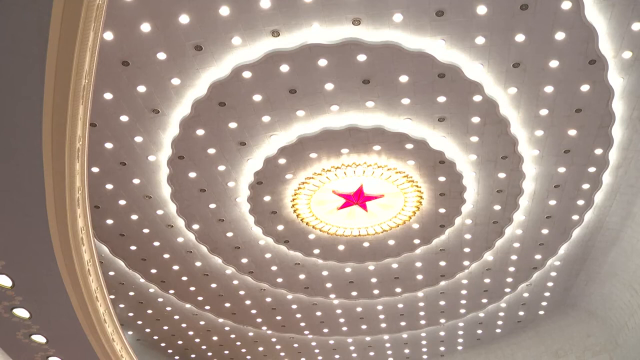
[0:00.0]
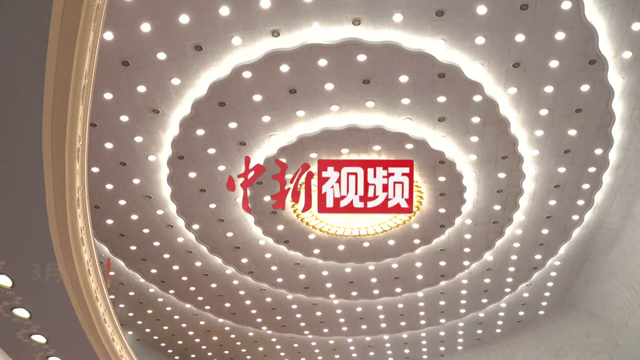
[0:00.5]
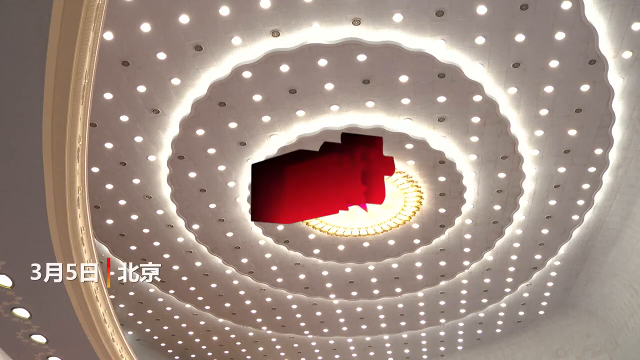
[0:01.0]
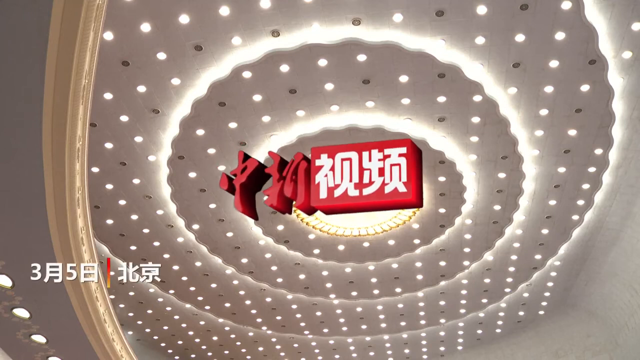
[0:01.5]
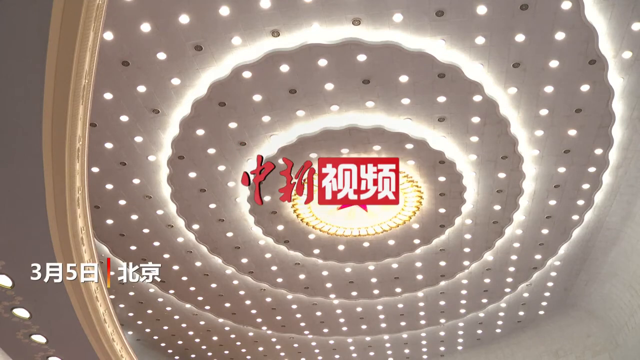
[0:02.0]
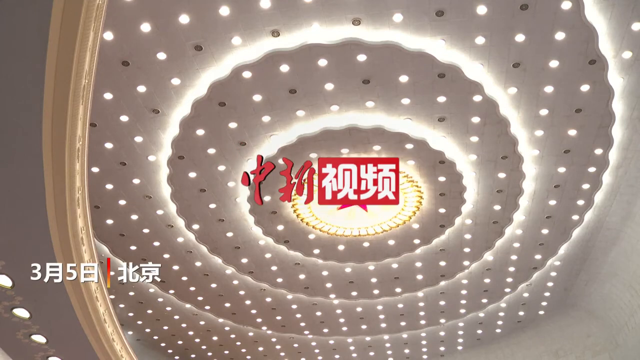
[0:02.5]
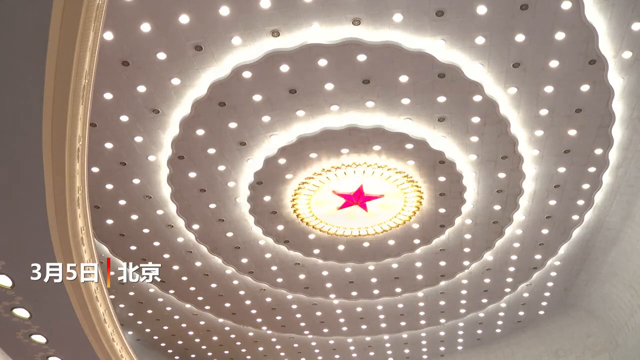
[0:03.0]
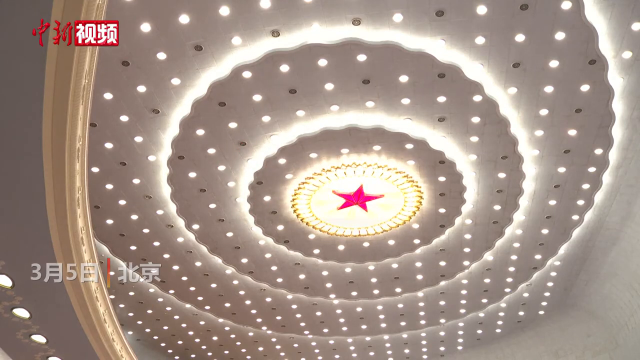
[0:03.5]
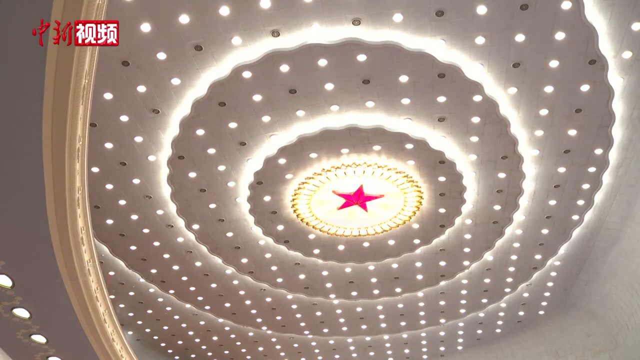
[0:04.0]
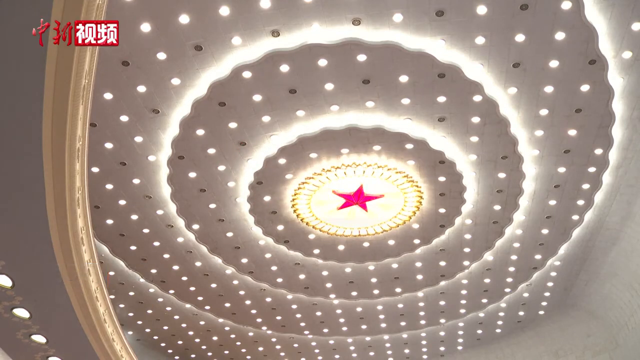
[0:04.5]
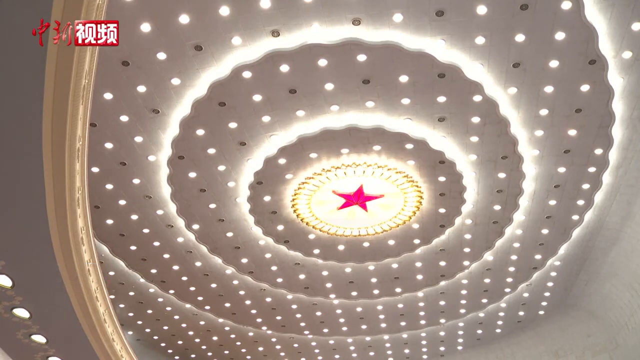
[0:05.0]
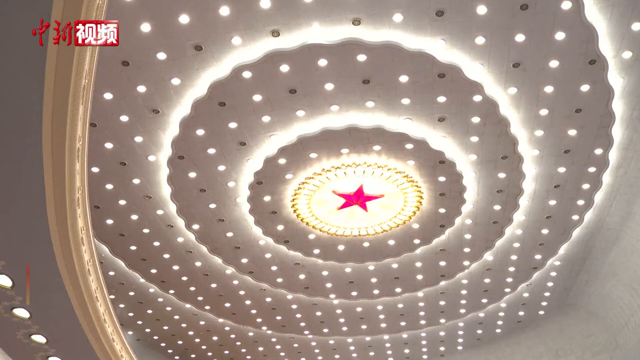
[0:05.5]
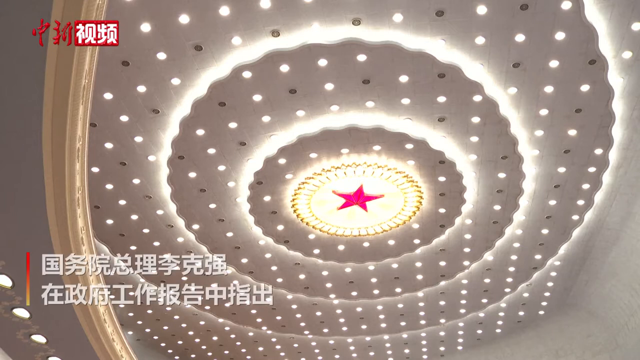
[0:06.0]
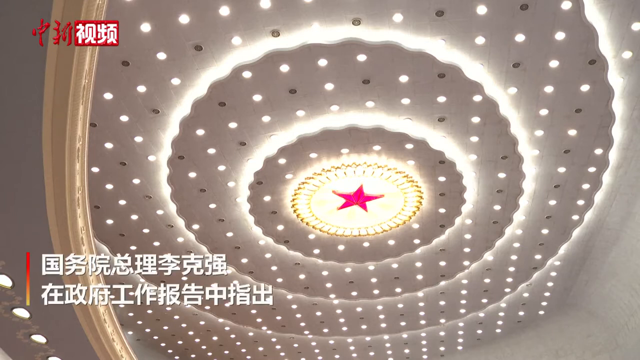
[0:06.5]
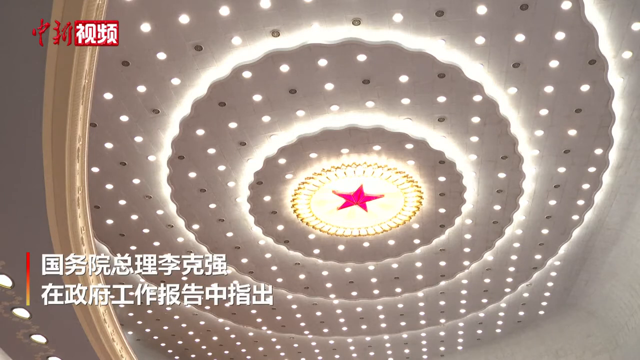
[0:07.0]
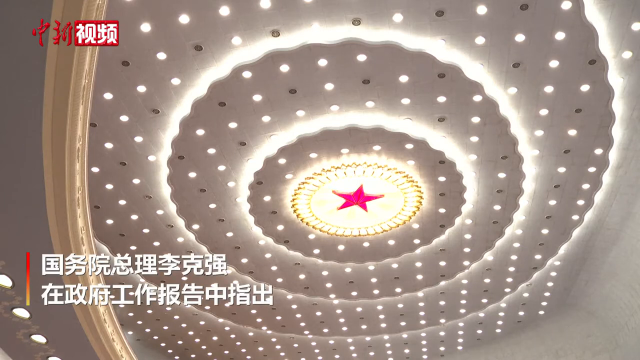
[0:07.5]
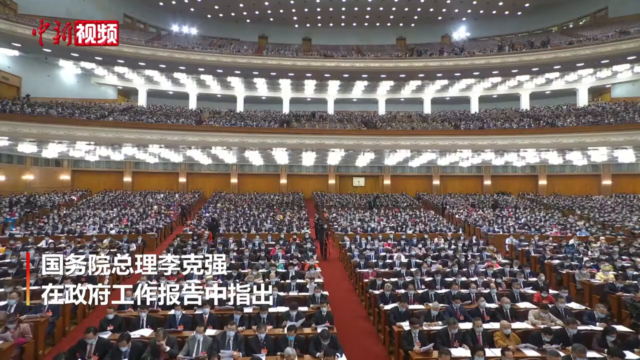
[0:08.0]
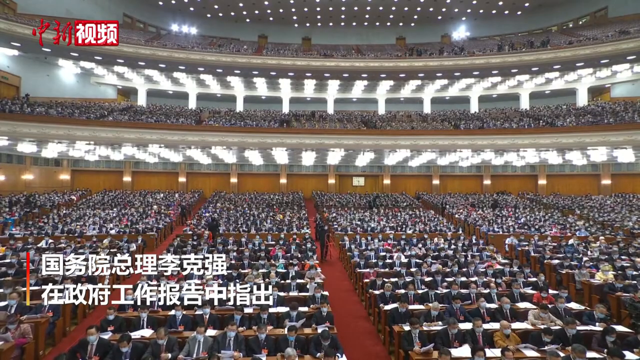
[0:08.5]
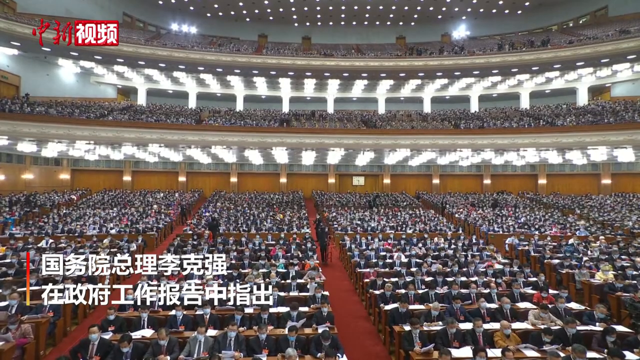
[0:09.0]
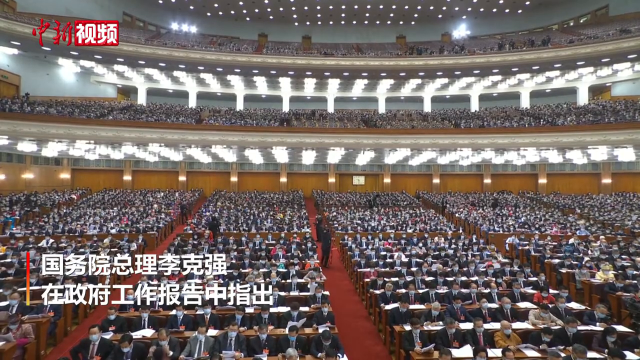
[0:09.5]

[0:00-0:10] The video opens on the ceiling inside what looks like a very large building. The ceiling appears white and gray, and lights seem to be shining on it so that it looks covered in white and gray polka dots. White swirls on the ceiling form a circular formation. In the middle of the ceiling there appears to be a round white circle with gold detailing, and in the very middle of this circle is a red star. Words in a global language then appear, and people are seen sitting inside the very large room.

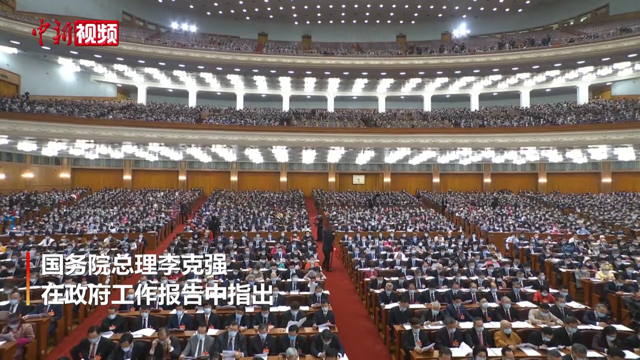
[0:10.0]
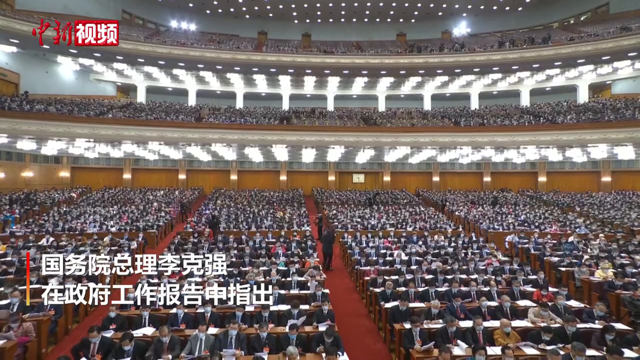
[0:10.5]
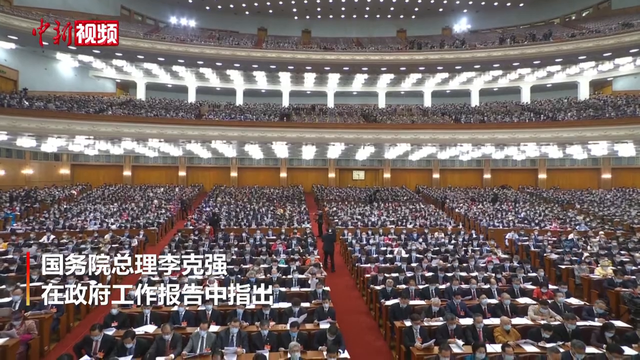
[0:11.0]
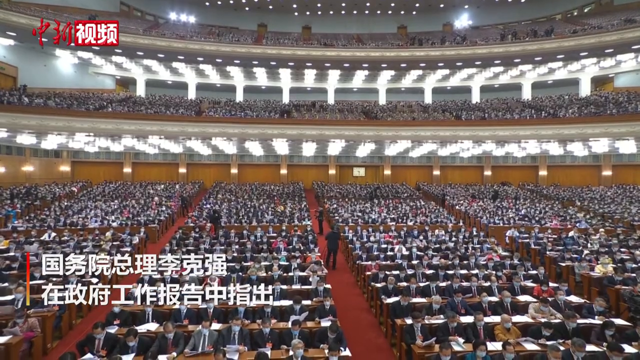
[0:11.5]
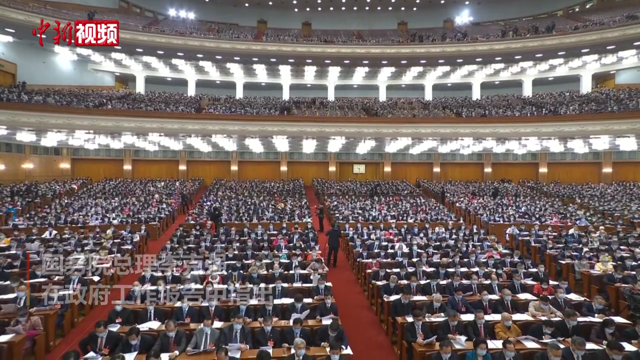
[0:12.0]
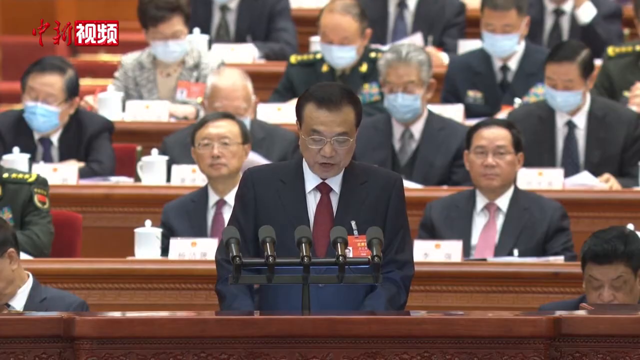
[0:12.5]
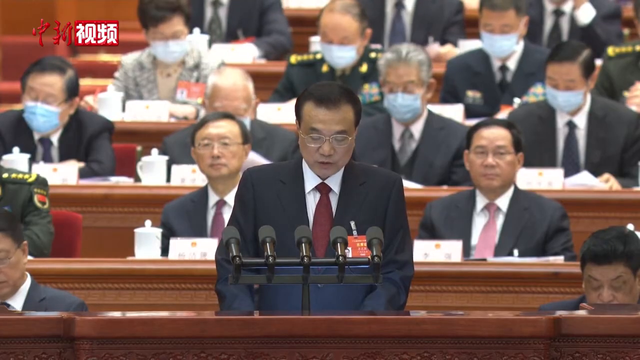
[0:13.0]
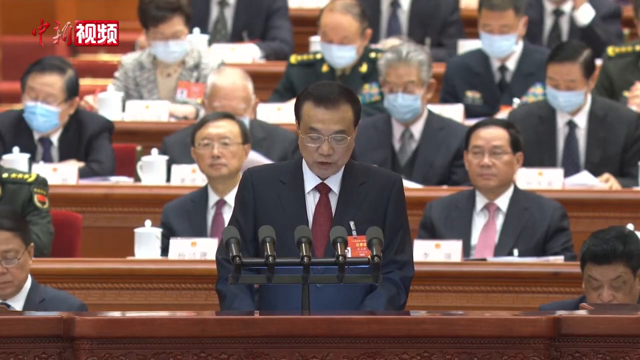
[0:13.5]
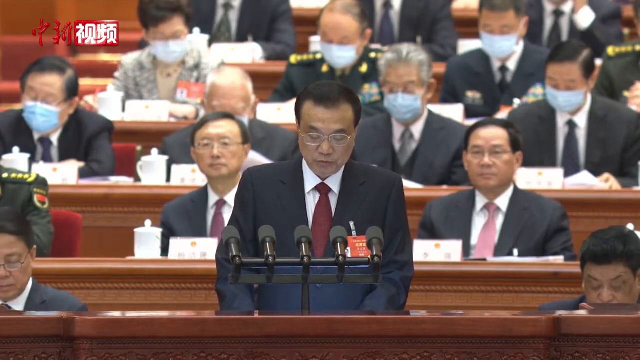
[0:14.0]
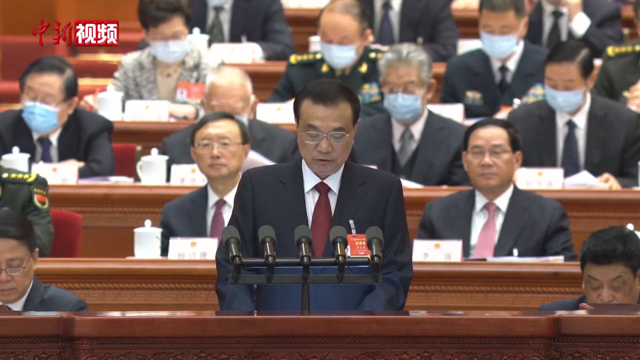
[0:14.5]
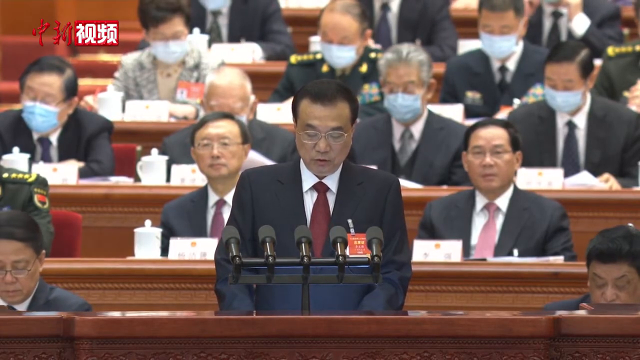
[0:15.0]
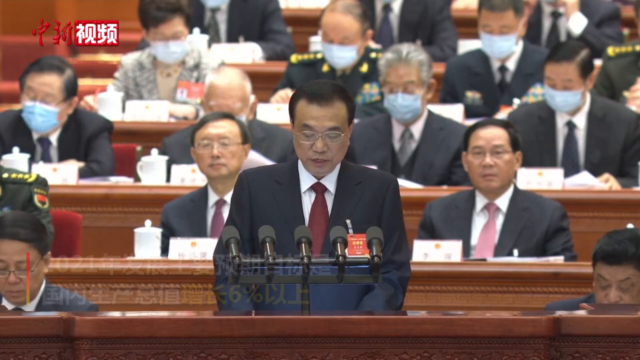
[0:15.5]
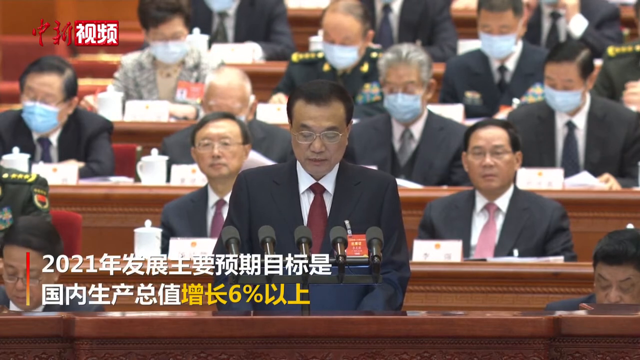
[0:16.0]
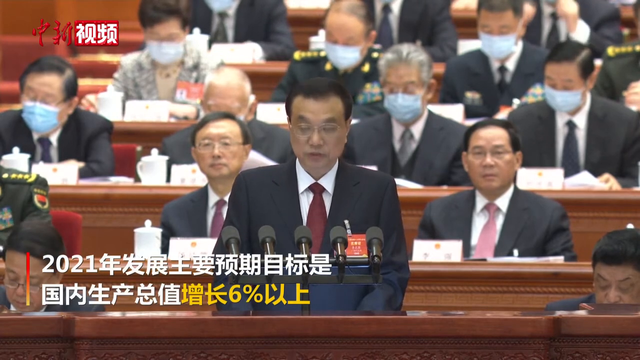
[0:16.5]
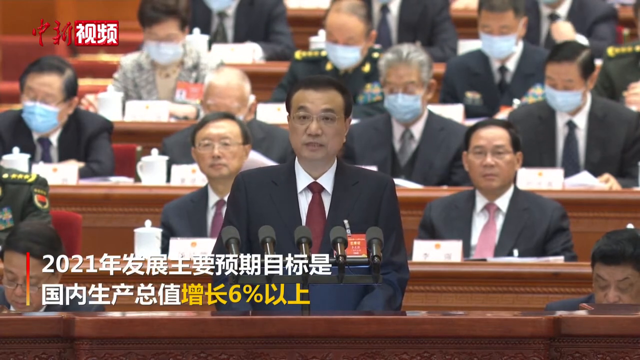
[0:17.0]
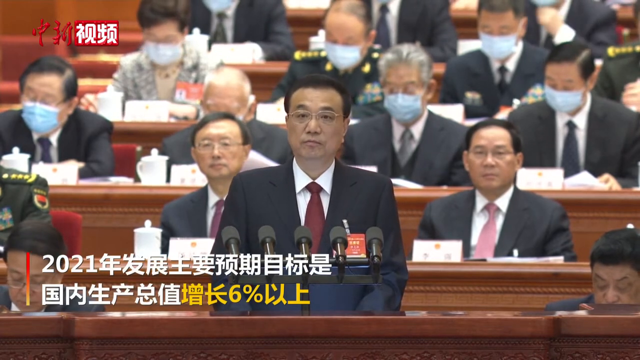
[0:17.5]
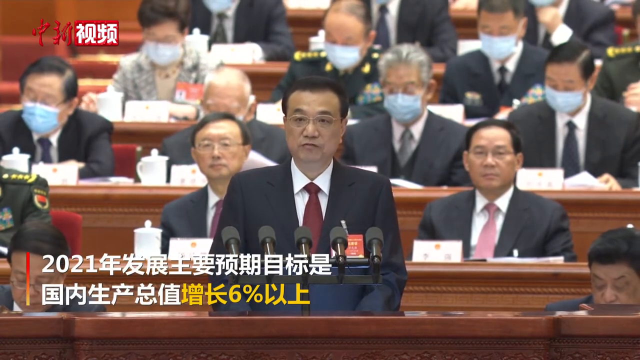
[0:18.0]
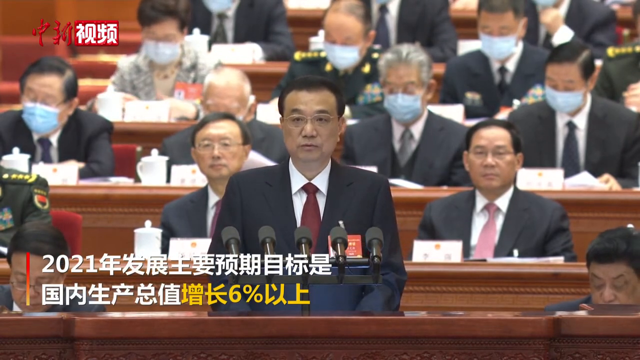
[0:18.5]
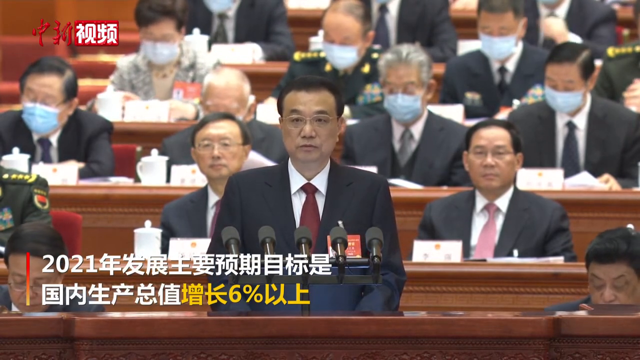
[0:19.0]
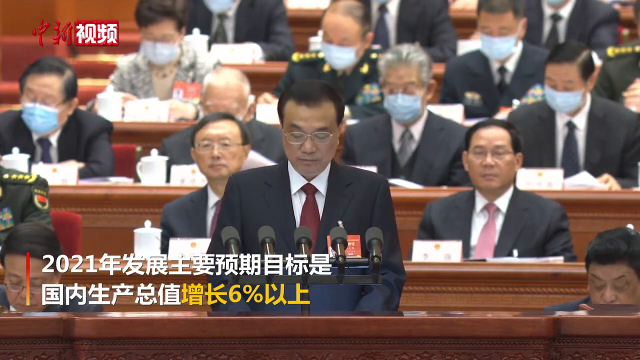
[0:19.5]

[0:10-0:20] People are gathered inside a very large room in a building that appears to have multiple levels, with at least three floors. The people sit in large gatherings shaped like rectangles, and the floor of the building is red. Text in a global language is written in the lower left and upper left corners of the video. Some men walk in the aisles, and a man speaks before the large group, standing behind a podium with five microphones on a stand in front of him. Several people sit behind him; some of them wear masks and some wear no face coverings.